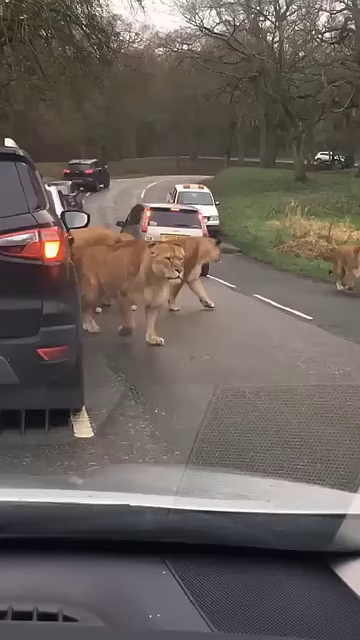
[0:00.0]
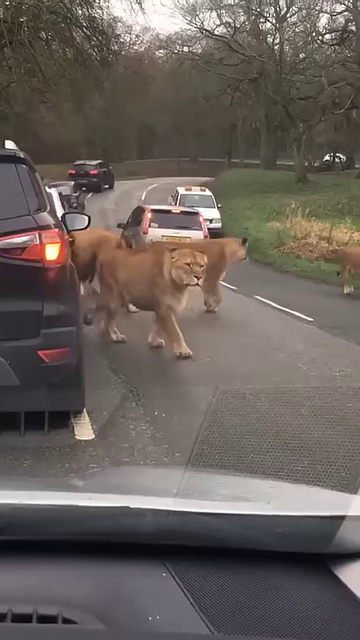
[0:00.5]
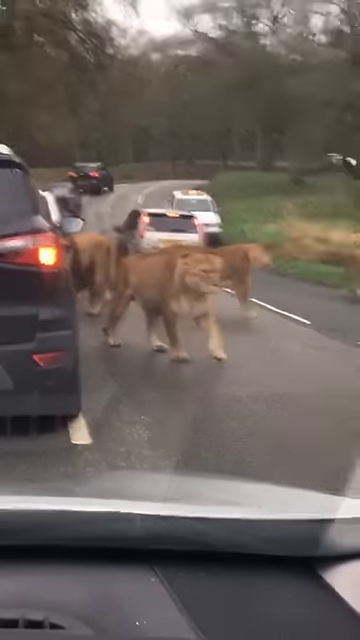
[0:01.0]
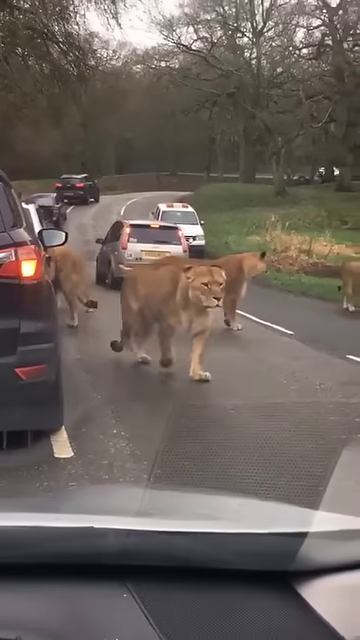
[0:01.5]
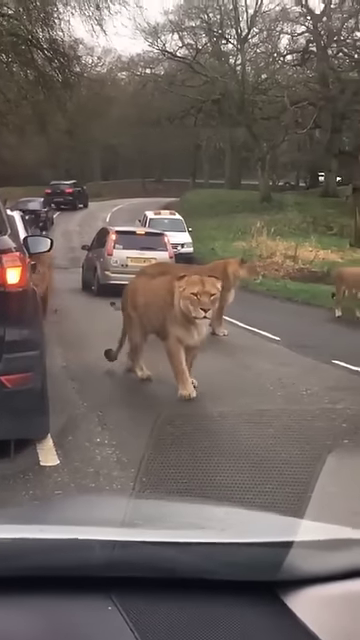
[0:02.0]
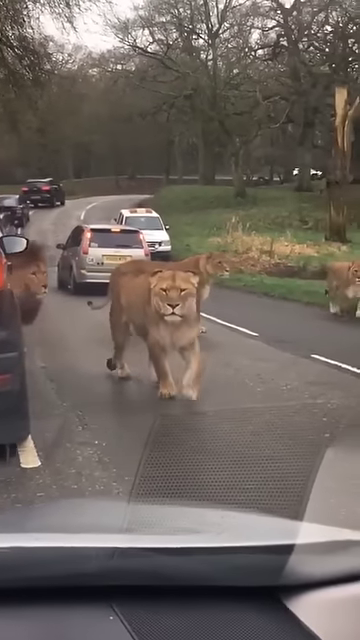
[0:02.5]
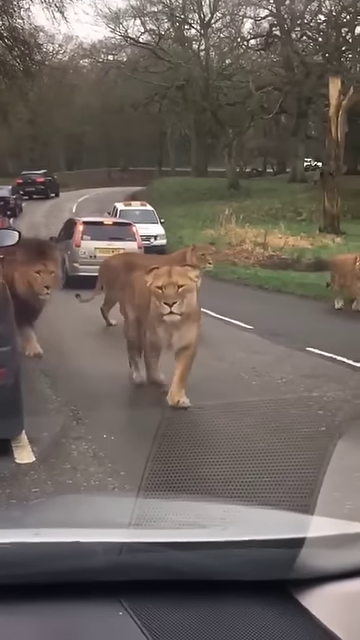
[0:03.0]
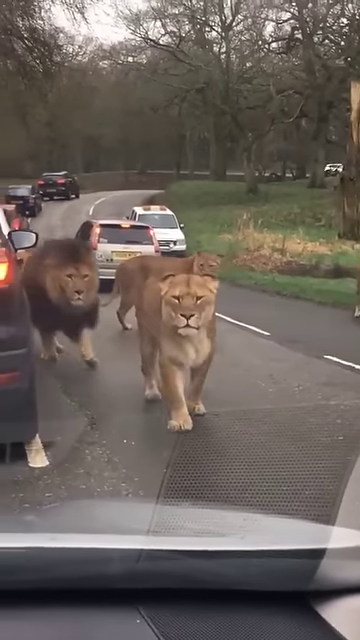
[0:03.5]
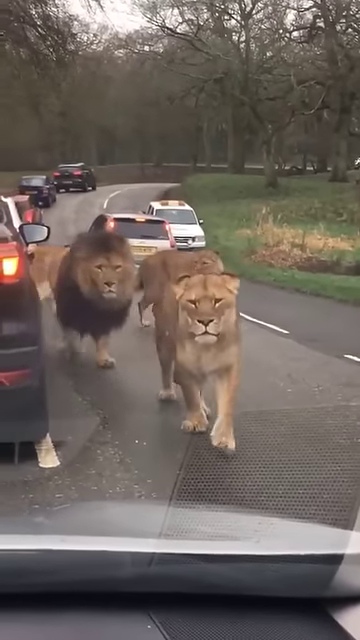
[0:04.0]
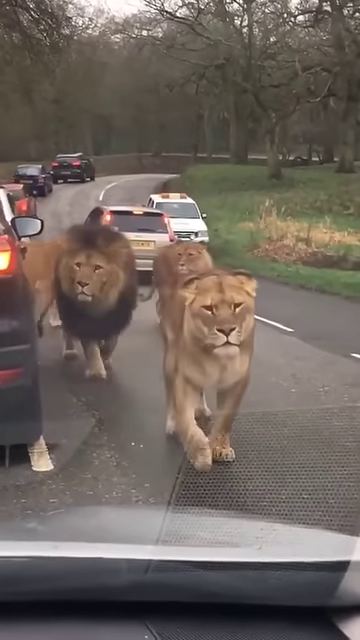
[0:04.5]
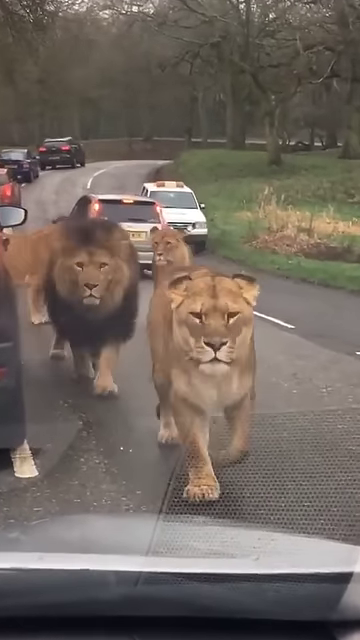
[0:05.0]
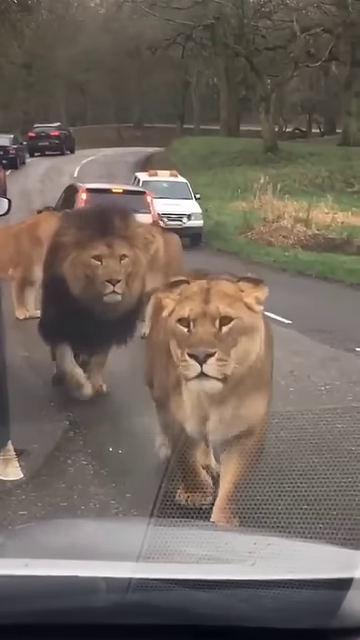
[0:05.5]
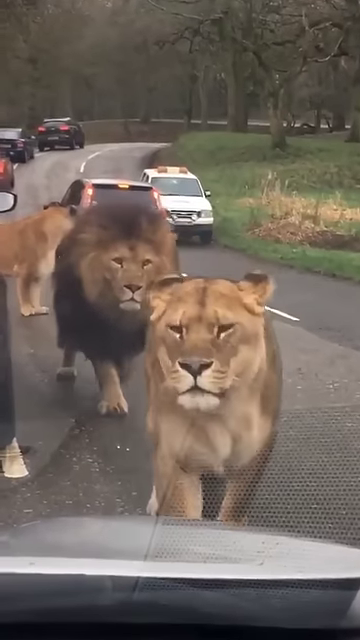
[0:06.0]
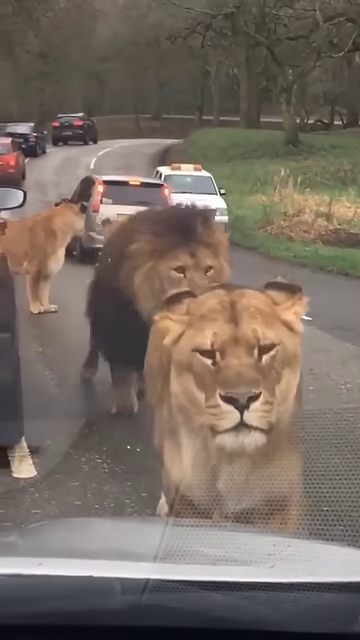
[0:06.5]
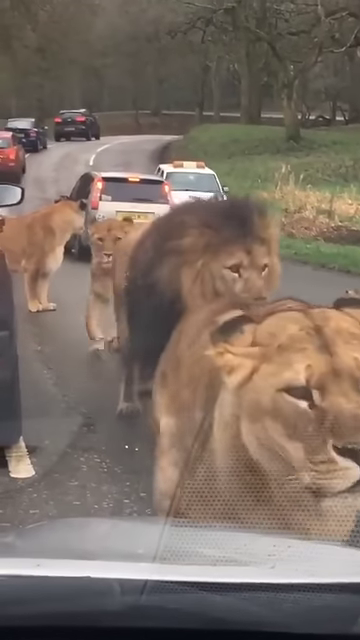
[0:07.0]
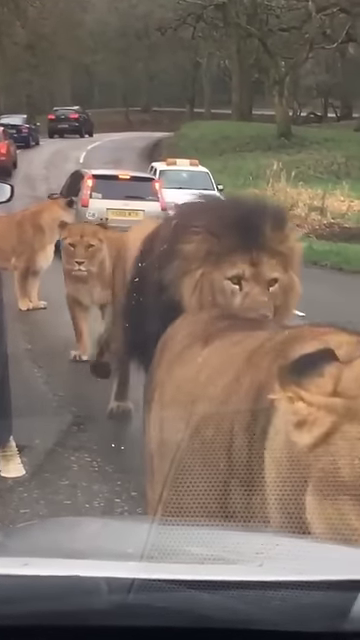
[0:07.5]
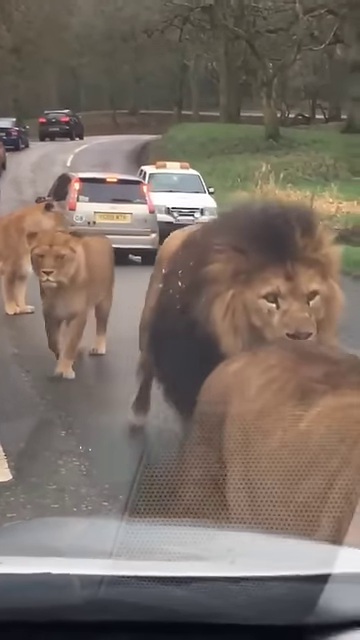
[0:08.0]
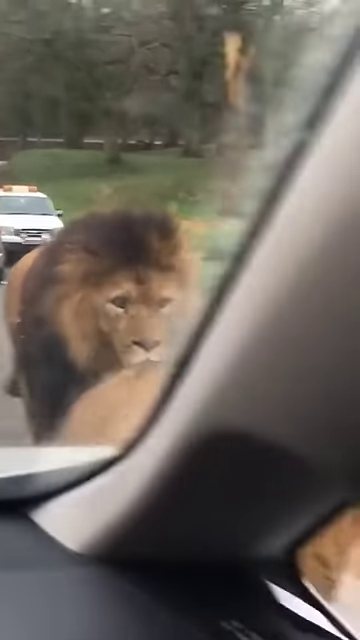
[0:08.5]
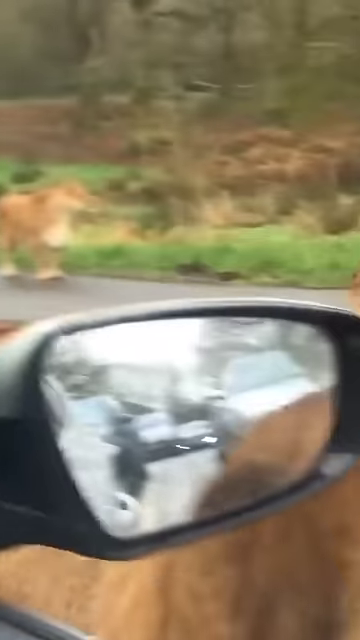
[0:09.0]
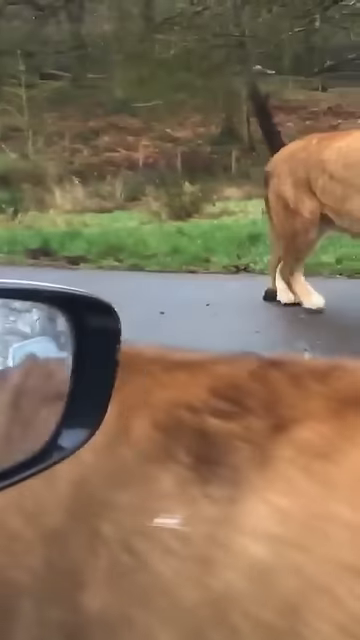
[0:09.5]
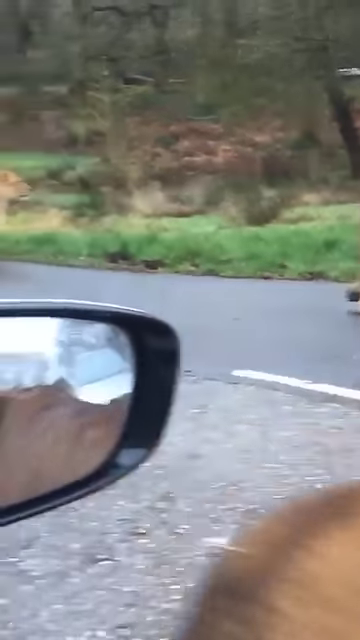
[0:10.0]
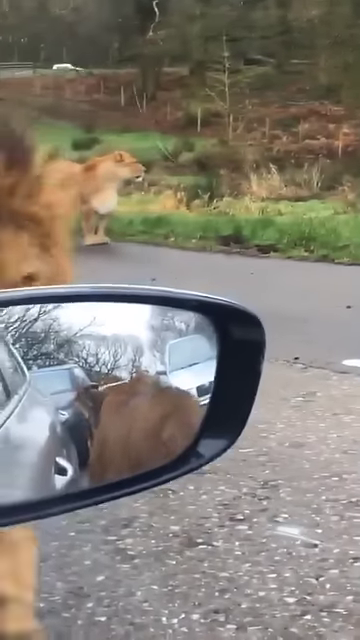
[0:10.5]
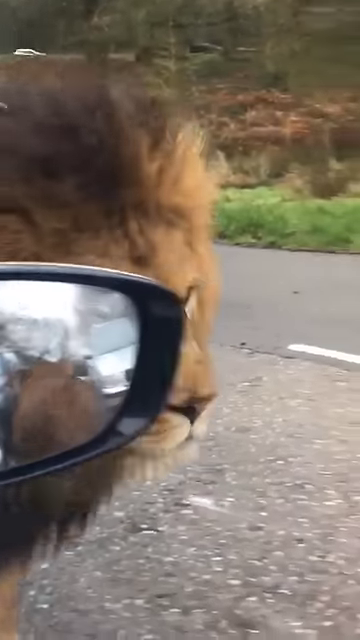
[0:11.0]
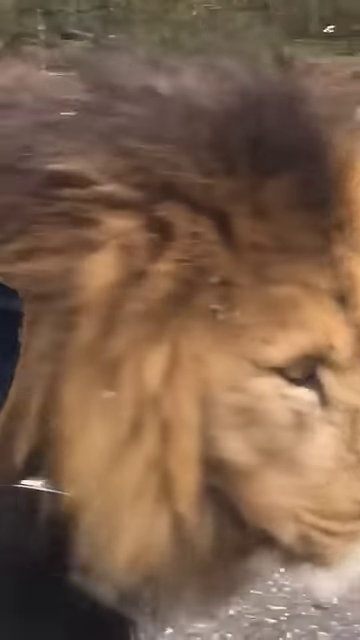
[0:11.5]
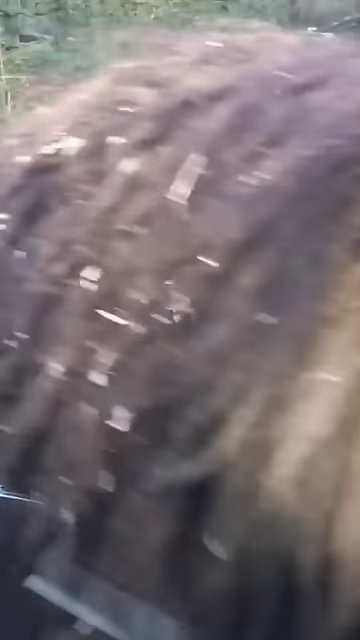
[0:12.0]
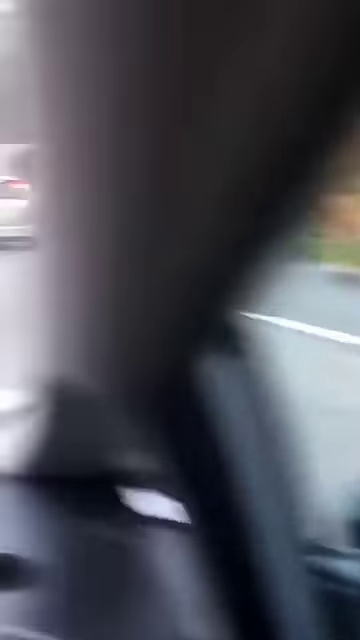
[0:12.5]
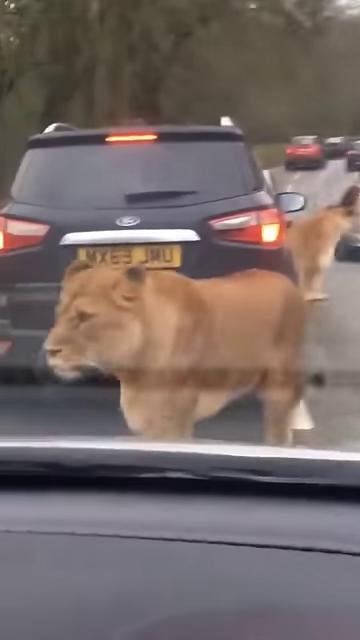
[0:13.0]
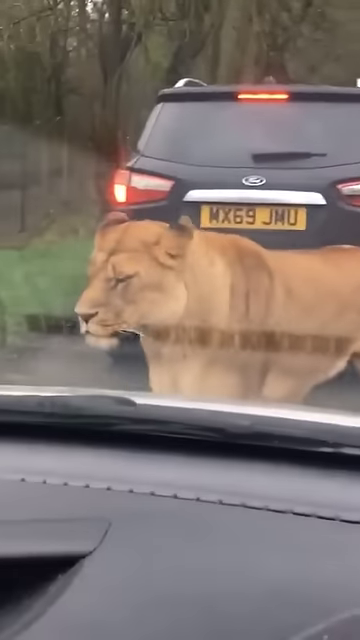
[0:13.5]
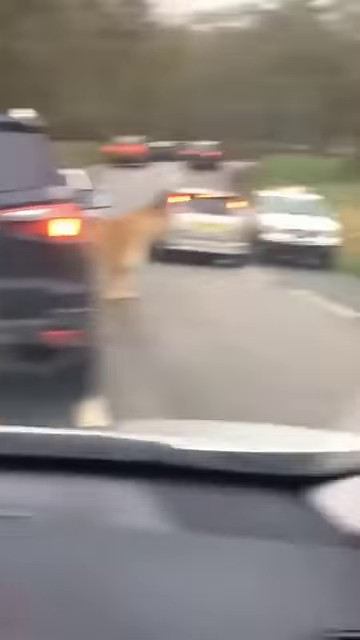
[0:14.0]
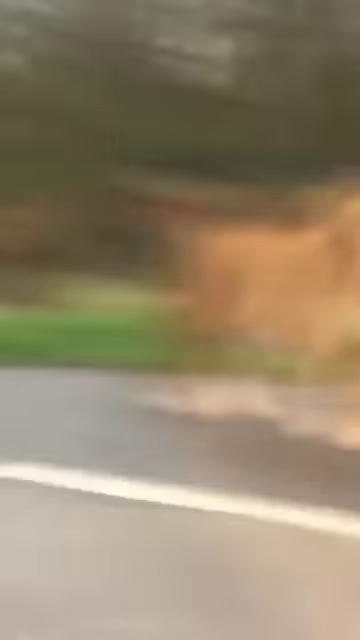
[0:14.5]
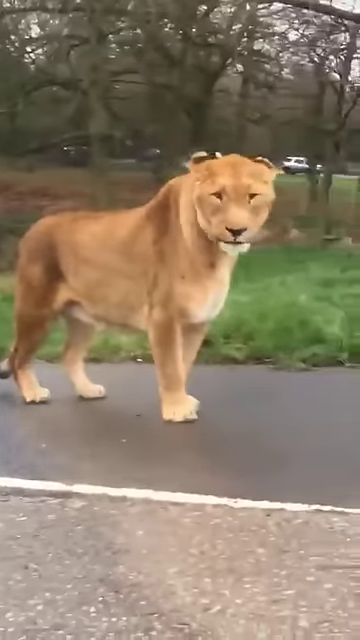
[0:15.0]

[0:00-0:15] The scene is set on a two-lane road, seen from the point of view of a passenger in a vehicle. What looks like three female lions are in the middle of the road. There are vehicles nearby, and one of them is pulled over and appears to have sirens on it. A line of vehicles is going along the left lane; the one directly in front is only half visible and looks like a black SUV. There appear to be four different lions: one is a male and two are female. They walk directly toward the camera in the vehicle. Two lions behind the two main ones in front are looking at other vehicles; part of one vehicle and about half of another are seen from a side view. The lions walk right by the vehicle. Another lion is shown walking by, with only its very back end visible. The male lion then walks by right next to the passenger window, and another lion approaches the car and walks by the driver's side of the vehicle.